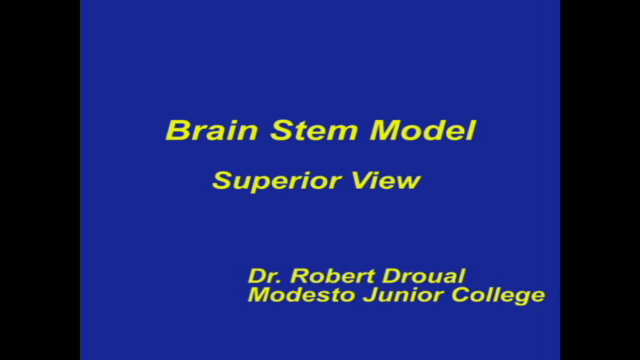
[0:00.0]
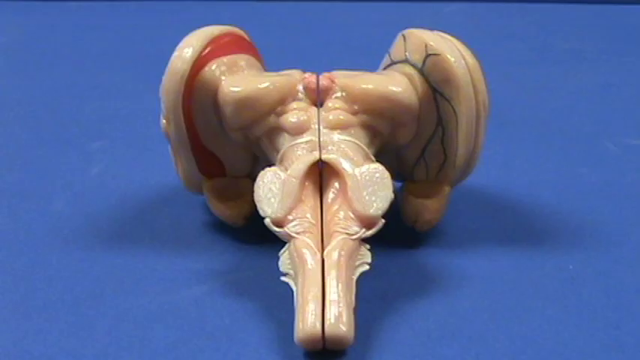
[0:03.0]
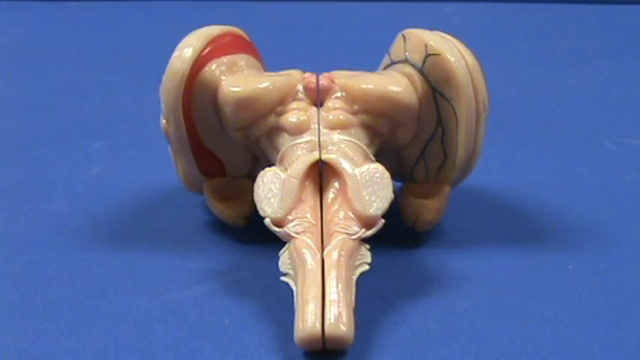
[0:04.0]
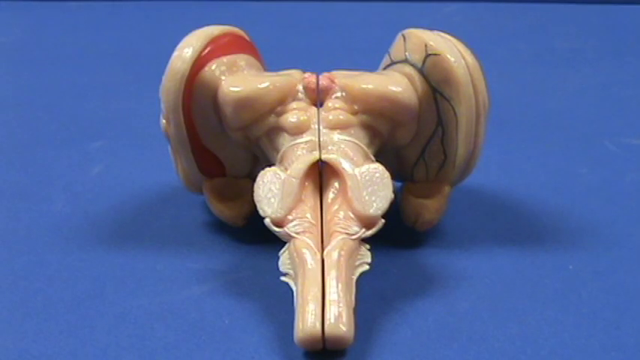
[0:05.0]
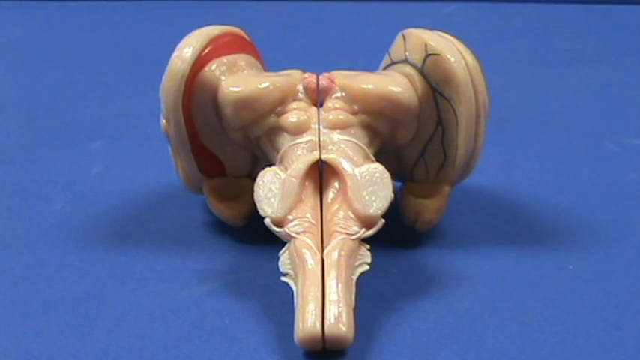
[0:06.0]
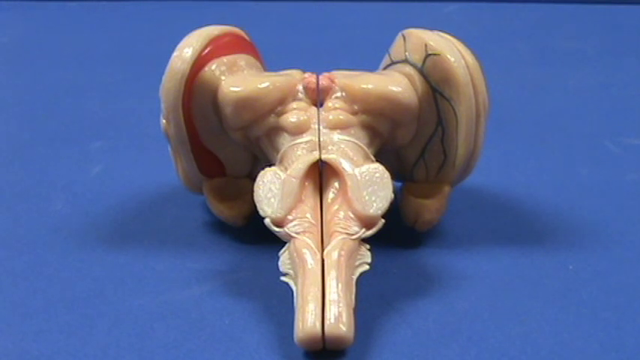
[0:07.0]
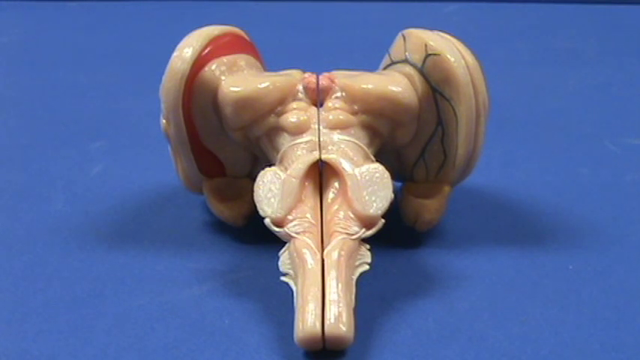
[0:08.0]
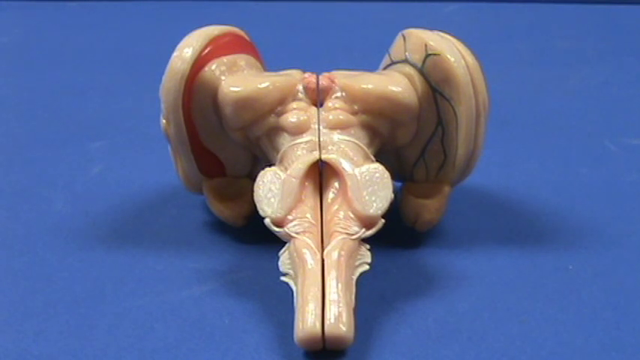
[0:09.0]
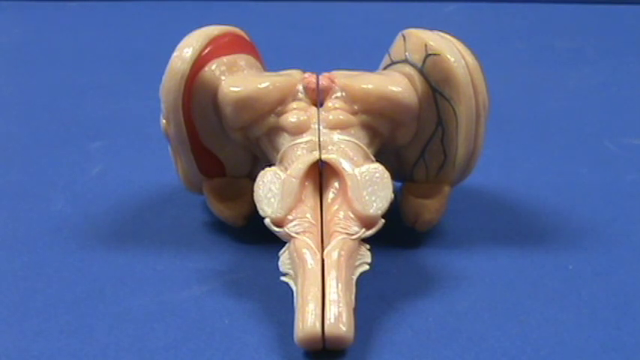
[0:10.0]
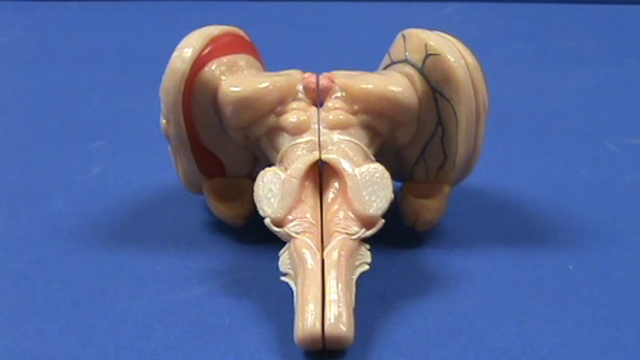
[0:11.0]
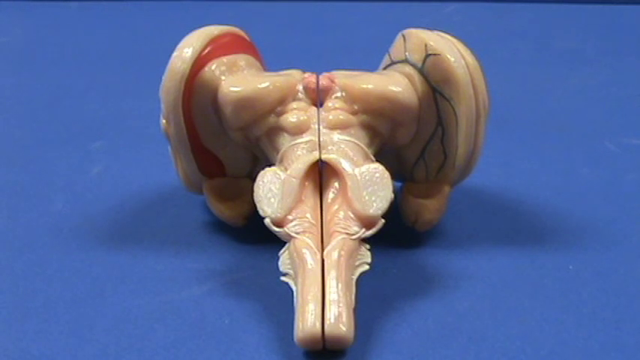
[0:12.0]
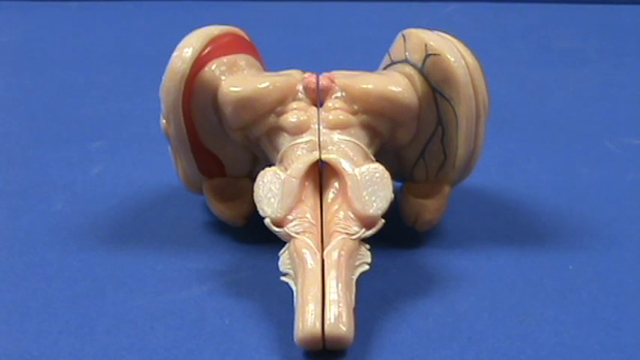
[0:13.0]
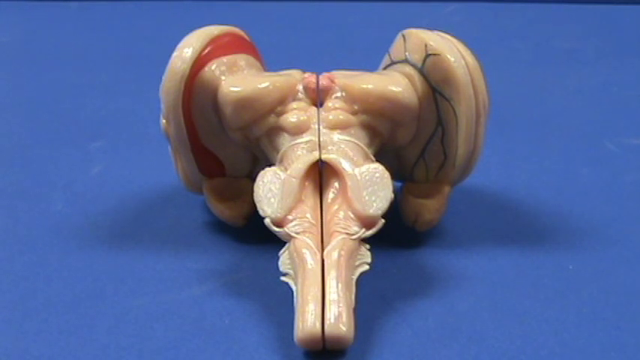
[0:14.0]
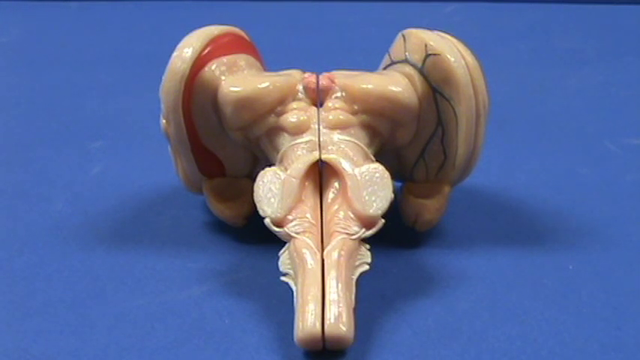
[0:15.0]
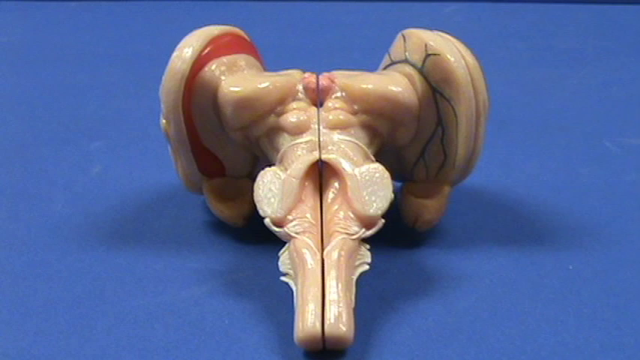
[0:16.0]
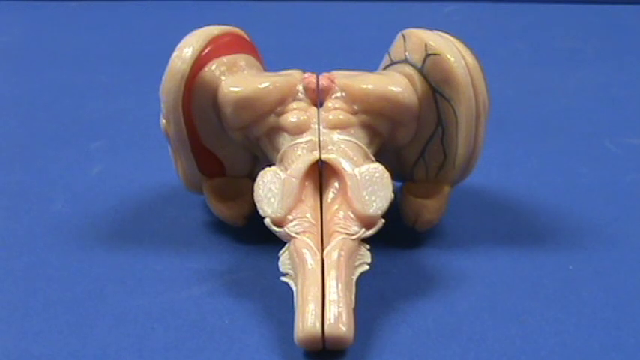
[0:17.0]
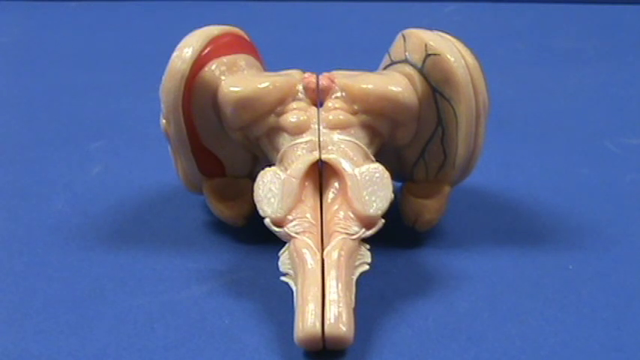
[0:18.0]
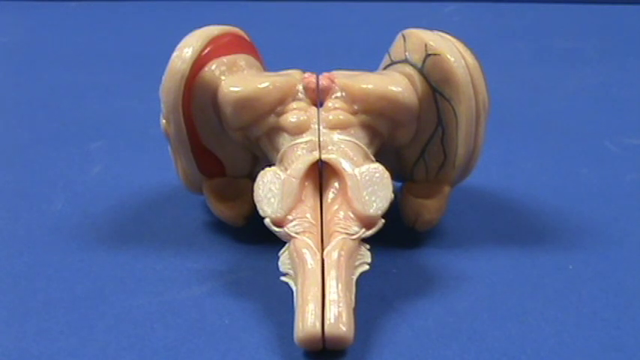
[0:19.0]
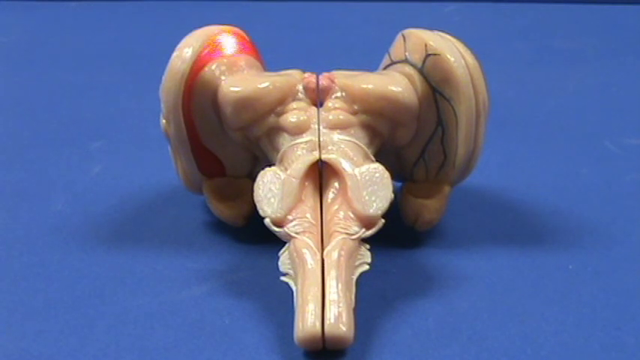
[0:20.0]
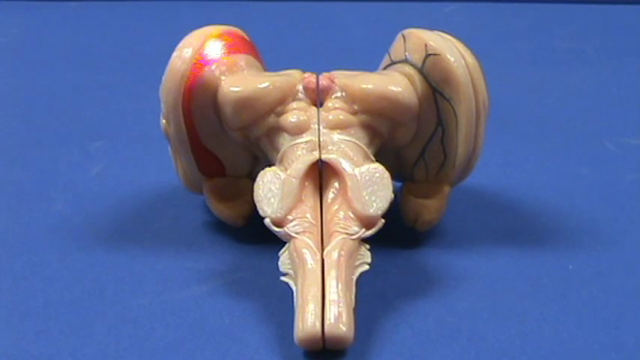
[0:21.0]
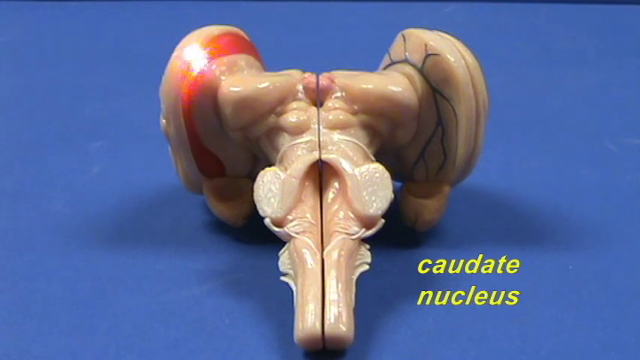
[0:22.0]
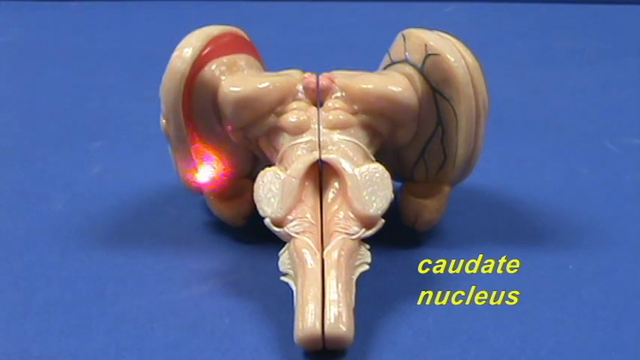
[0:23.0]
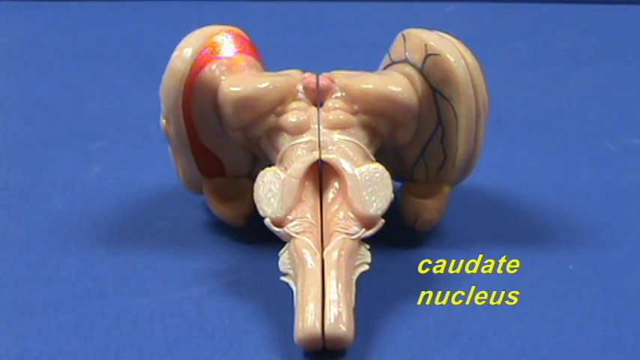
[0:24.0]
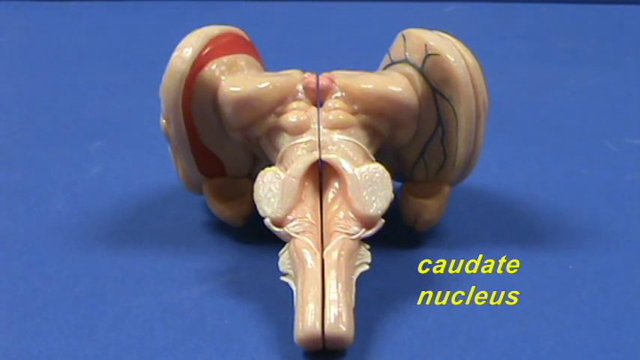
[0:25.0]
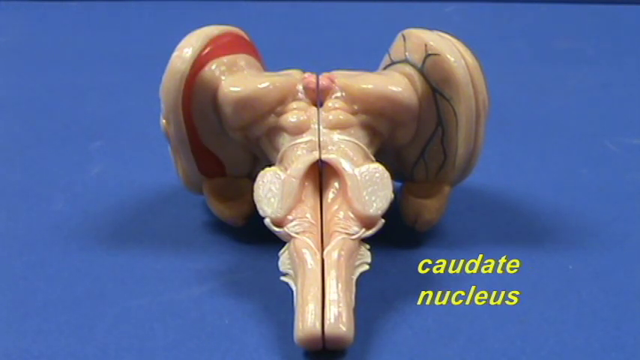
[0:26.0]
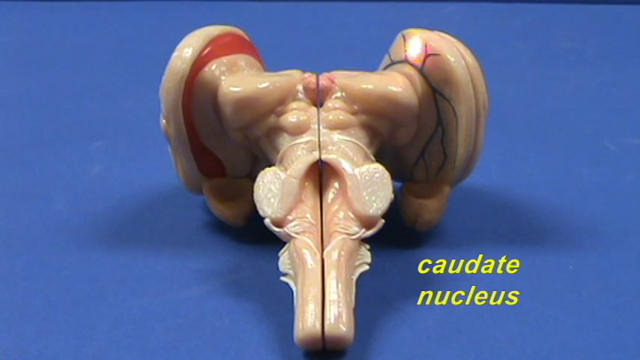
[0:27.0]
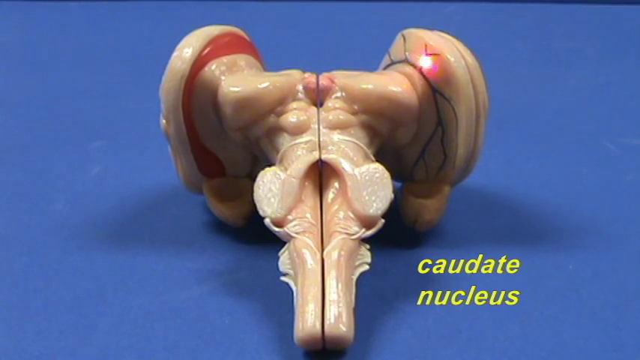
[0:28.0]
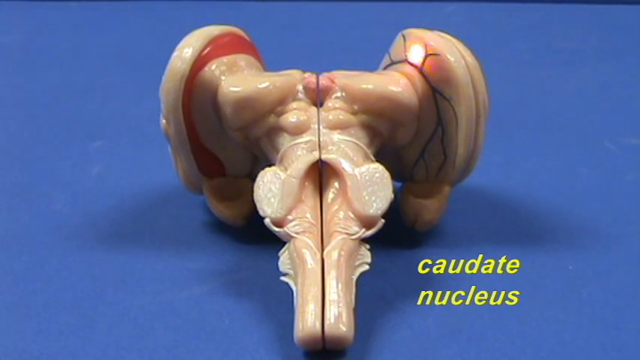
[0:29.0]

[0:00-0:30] The video opens on a black background with a blue screen in the center bearing yellow text that reads "Brain STEM Model Superior View." In the lower part of the screen, offset to the right, it reads "Dr. Robert Droual. Modesto Junior College." The scene then changes to a model sitting on a blue table surface, a model of the brain stem. It is flesh-toned, slightly paler in some areas and darker in others, and looks almost like the shape of a letter T. At the top left and right are large, round, almost ear-shaped pieces. The person making the video uses a laser light to highlight these ear-shaped pieces, and as they do, blue text at the bottom right of the model, over the screen, reads "caudate nucleus." The laser then goes over the opposite part of the model, and the same text appears. Different sections of the brain stem are being shown along with their names.